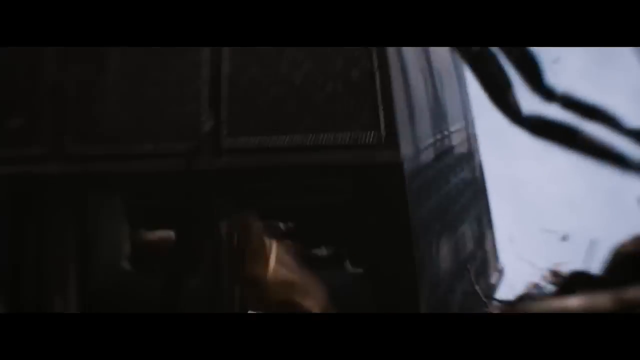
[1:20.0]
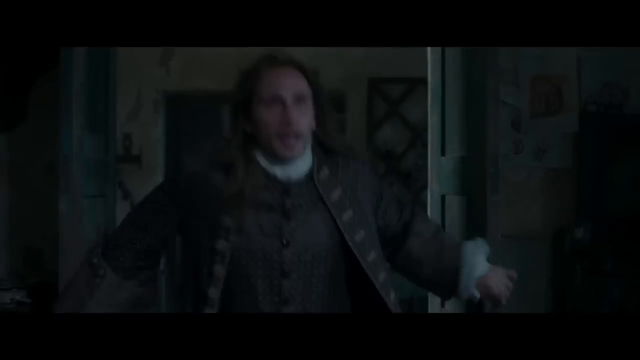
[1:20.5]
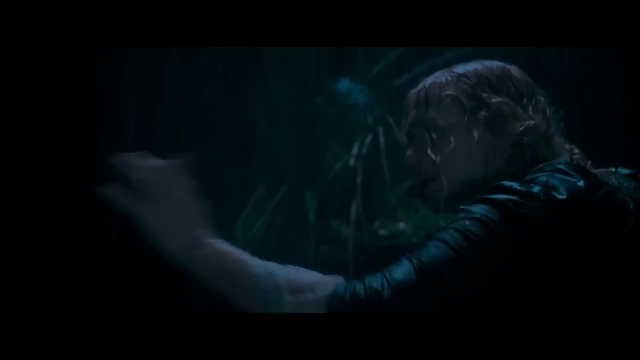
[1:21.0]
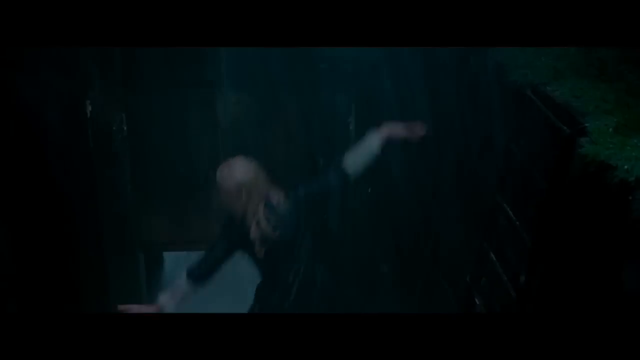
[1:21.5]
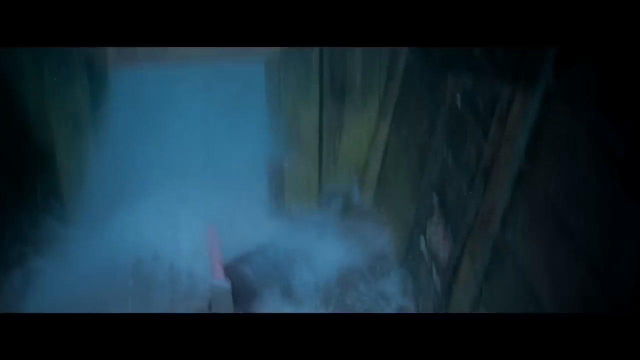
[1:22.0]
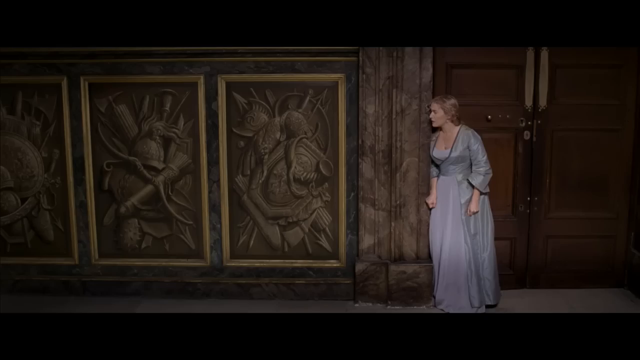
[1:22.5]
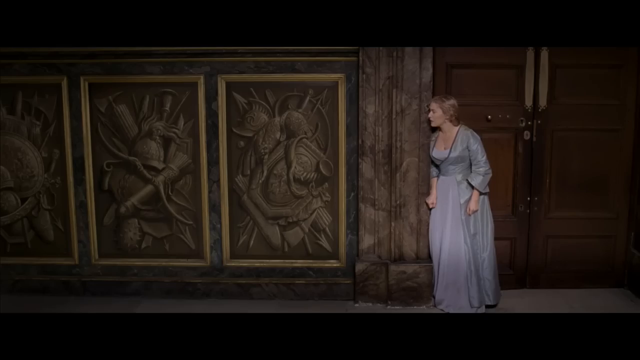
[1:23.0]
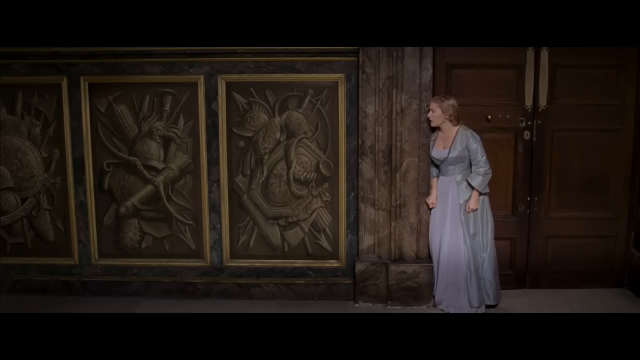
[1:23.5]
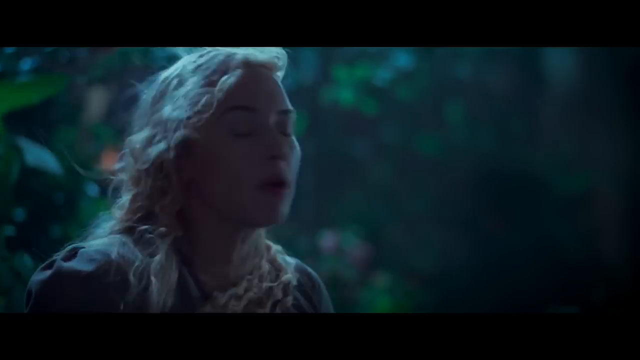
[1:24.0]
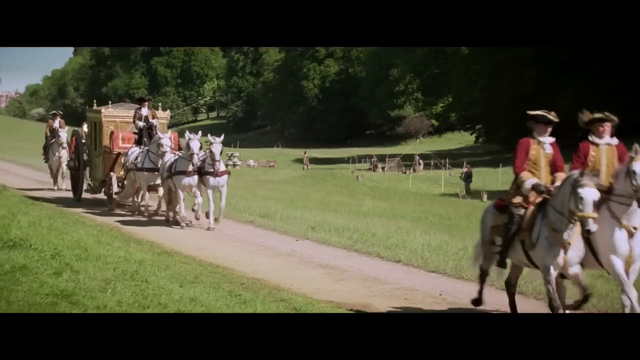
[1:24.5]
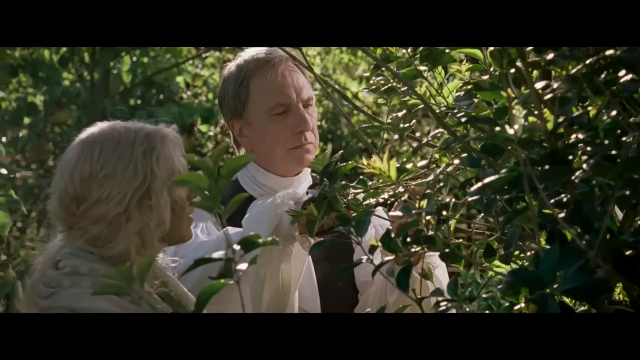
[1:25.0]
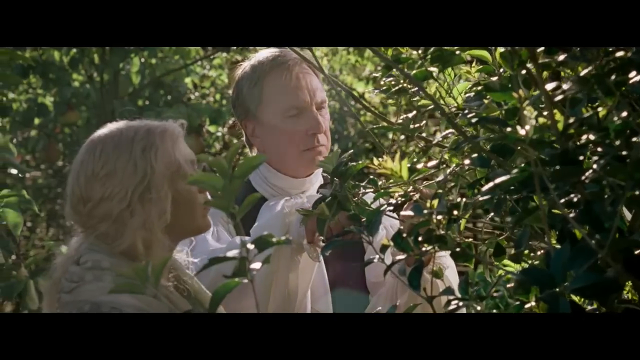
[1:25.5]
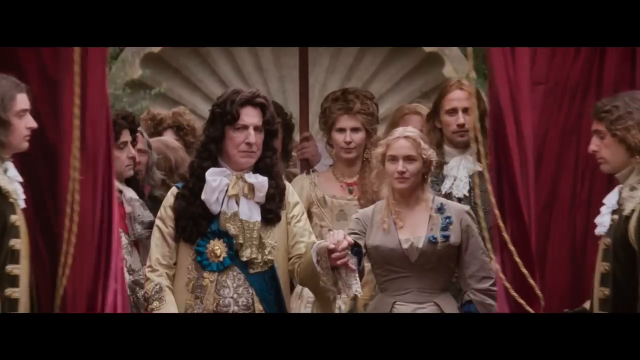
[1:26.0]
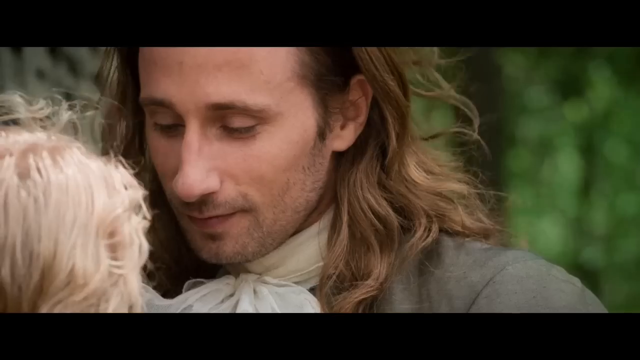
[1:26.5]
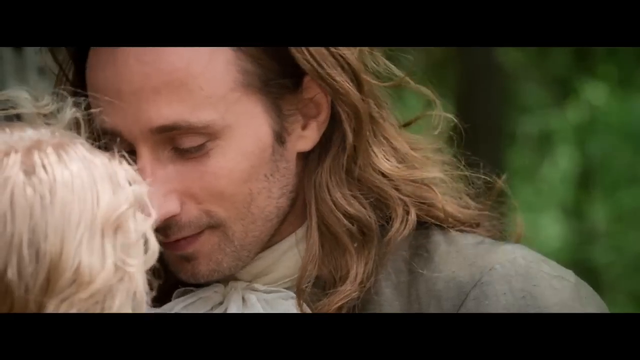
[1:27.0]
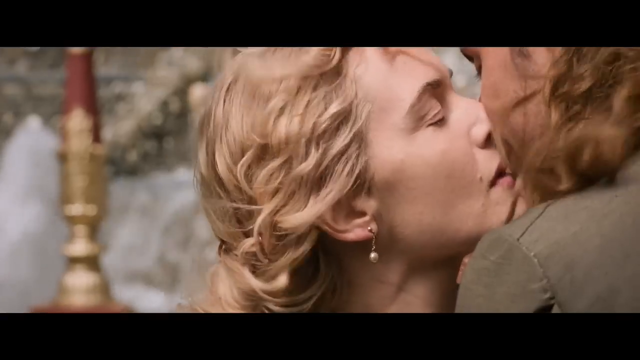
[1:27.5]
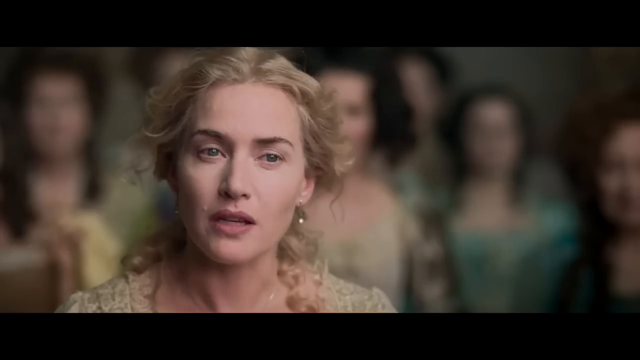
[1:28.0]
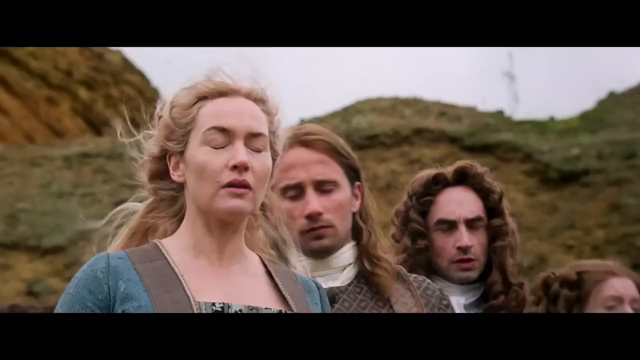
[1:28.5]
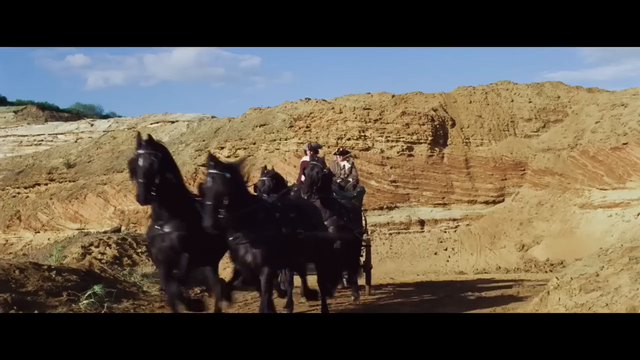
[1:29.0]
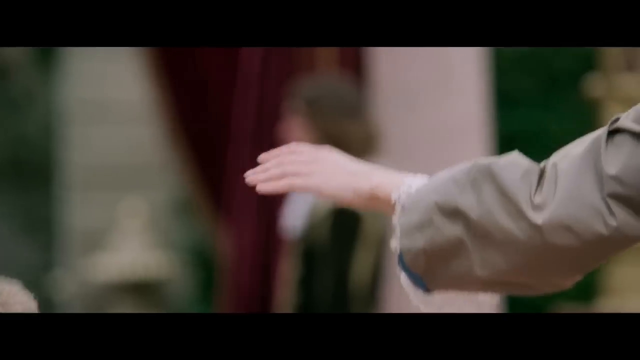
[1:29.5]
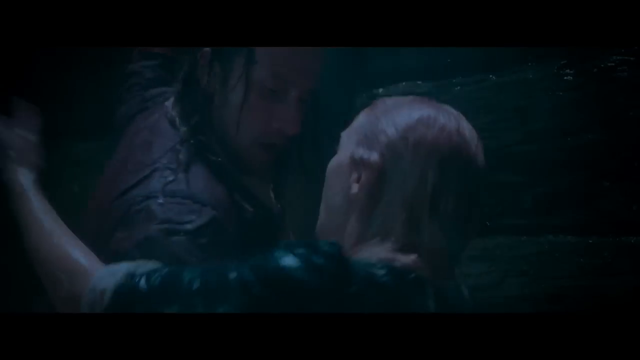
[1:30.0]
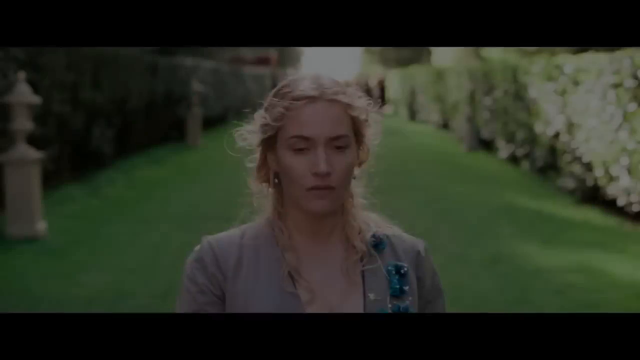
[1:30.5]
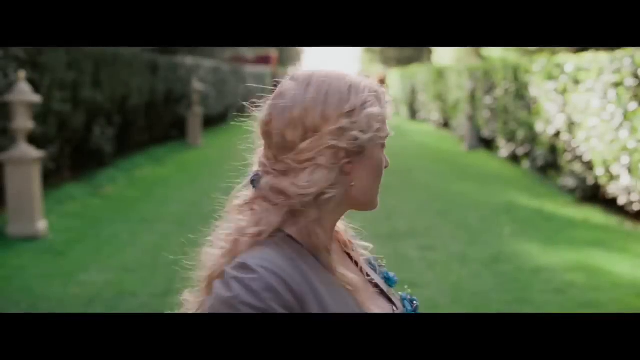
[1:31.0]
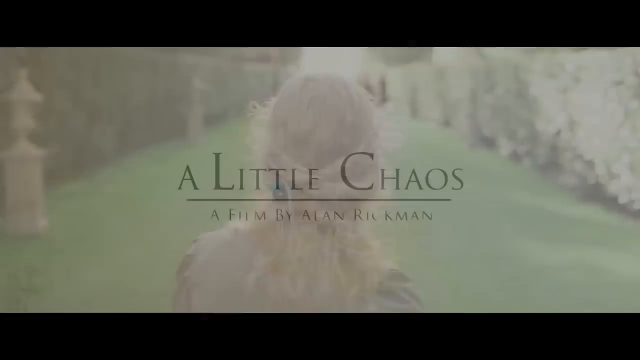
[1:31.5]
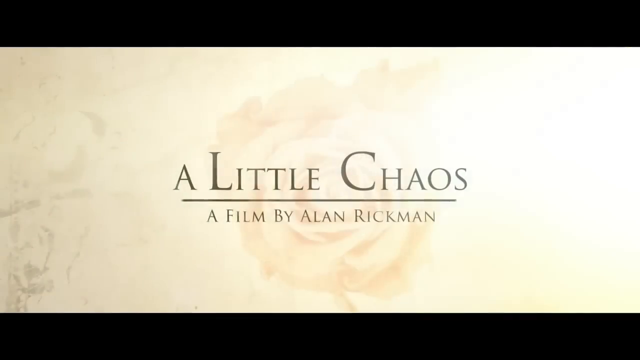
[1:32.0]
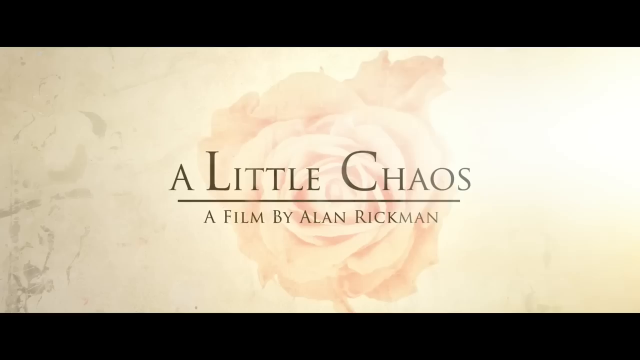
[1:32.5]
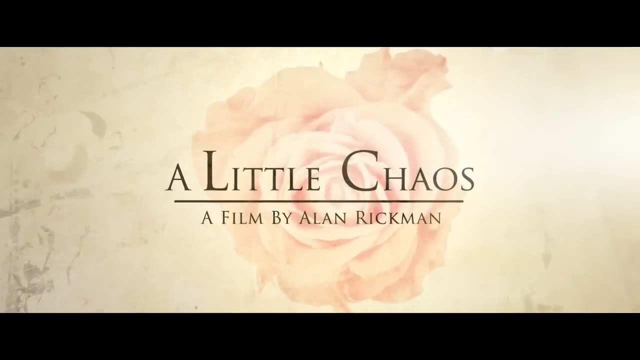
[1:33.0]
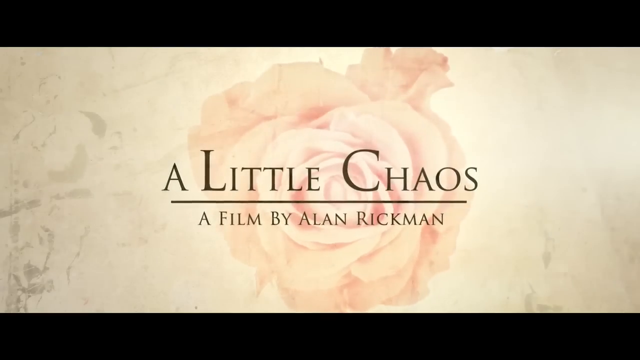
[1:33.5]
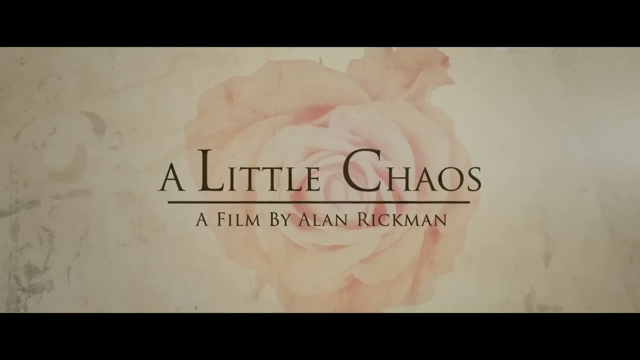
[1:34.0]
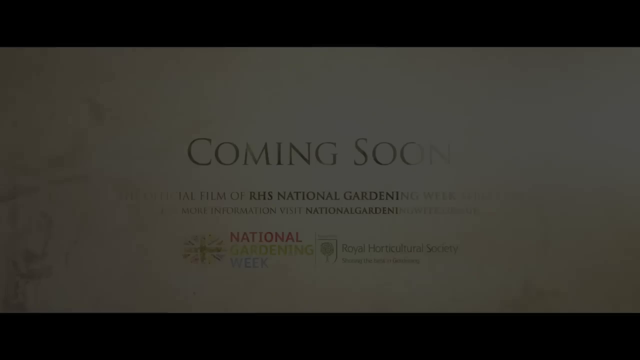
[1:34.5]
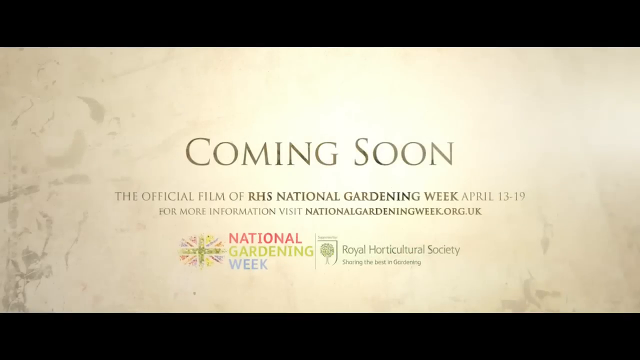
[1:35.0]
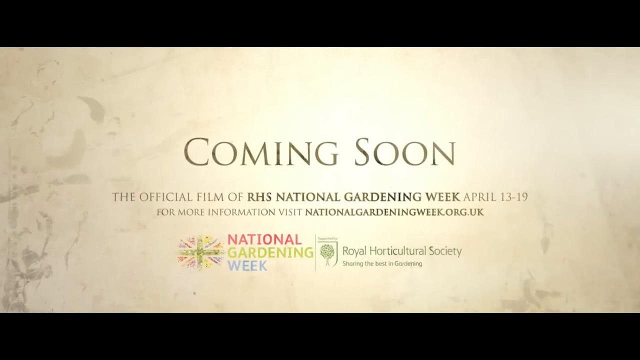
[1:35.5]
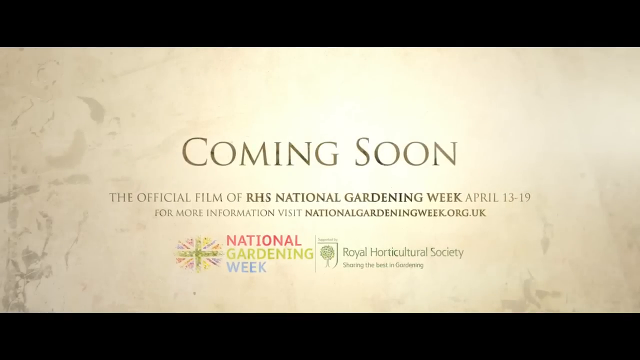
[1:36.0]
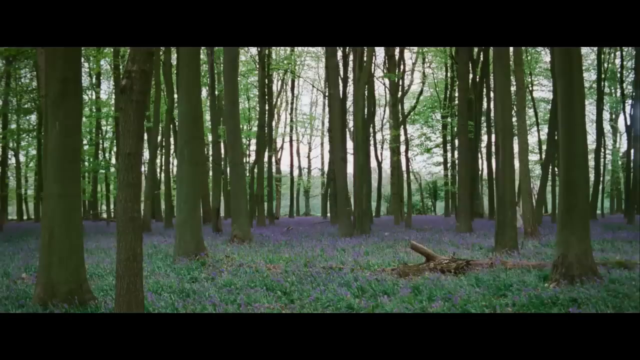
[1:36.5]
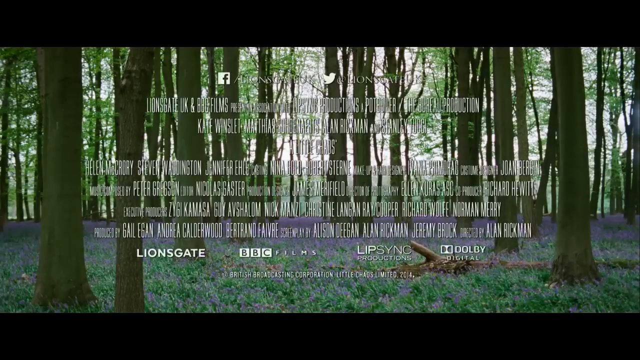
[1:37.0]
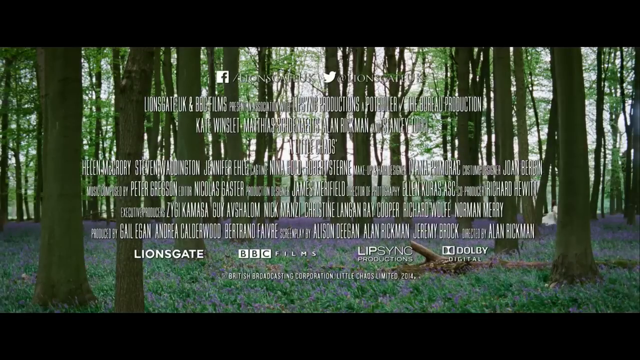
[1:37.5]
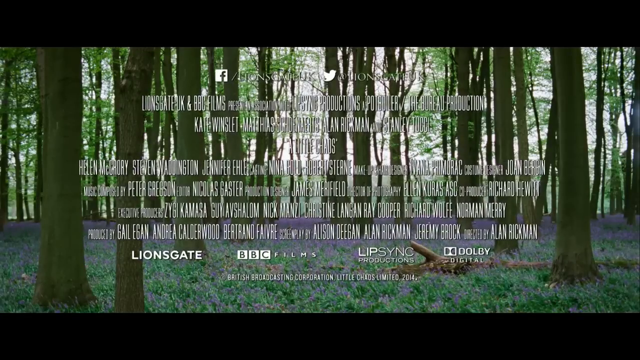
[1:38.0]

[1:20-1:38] The title of the movie is shown as "A Little Chaos", a film by Alan Rickman, starring Kate Winslet, who is in love with the king's son. The two appear deeply in love. Text says the movie is "coming soon" and is the official film of National Gardening Week, with dates April 13 and 19 and the website "nationalgardensweek.org.uk". Behind these names there is an actress. Text also reads that a little risk can change everything.